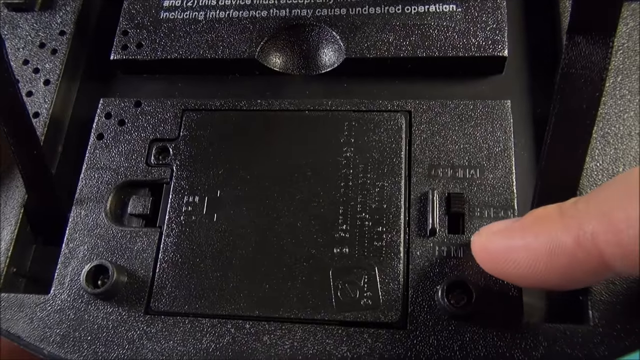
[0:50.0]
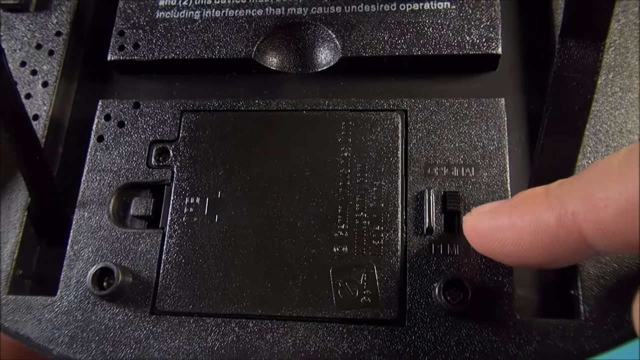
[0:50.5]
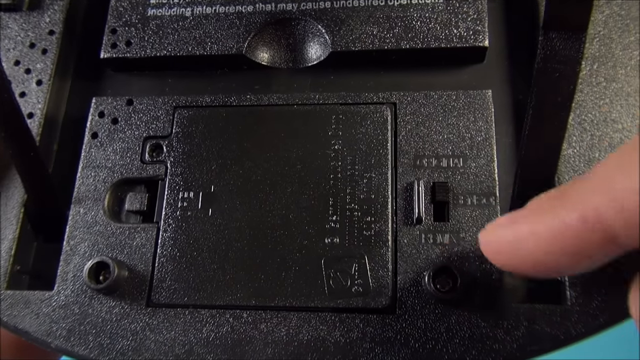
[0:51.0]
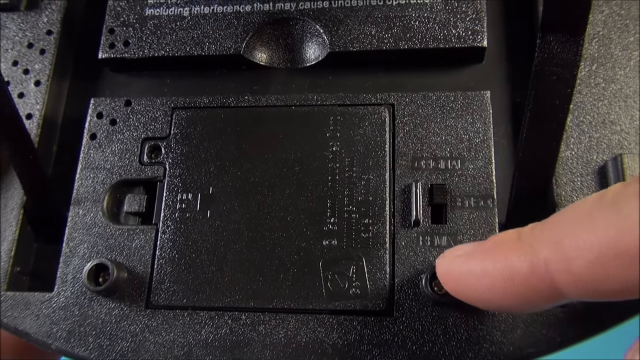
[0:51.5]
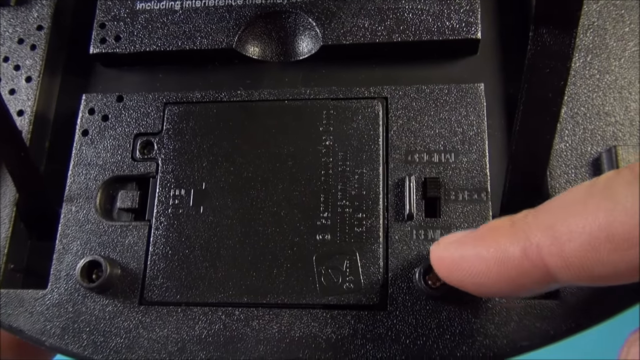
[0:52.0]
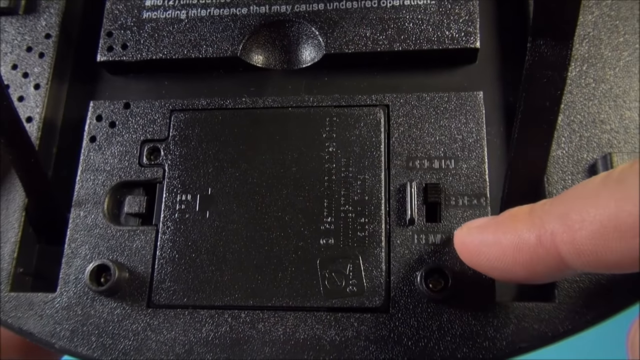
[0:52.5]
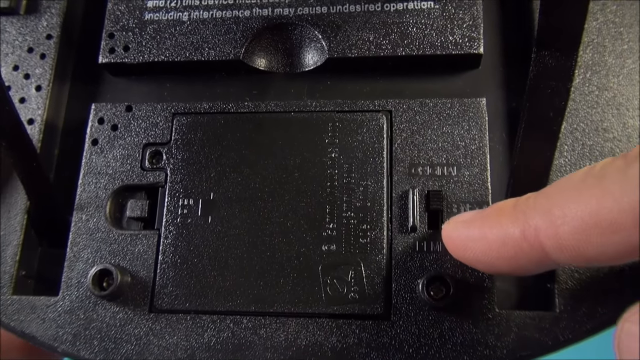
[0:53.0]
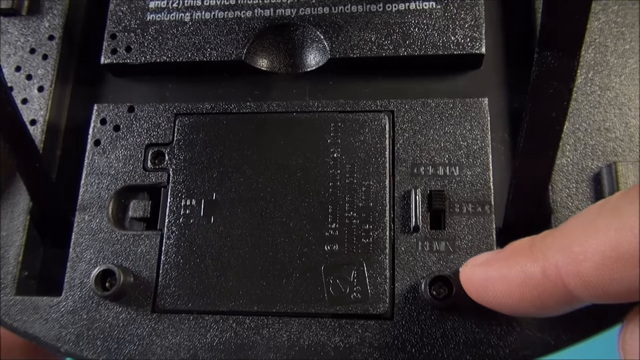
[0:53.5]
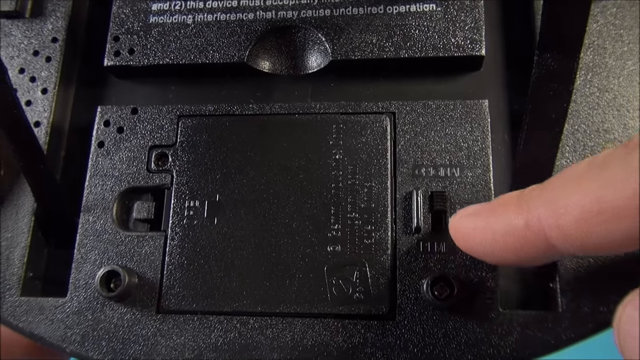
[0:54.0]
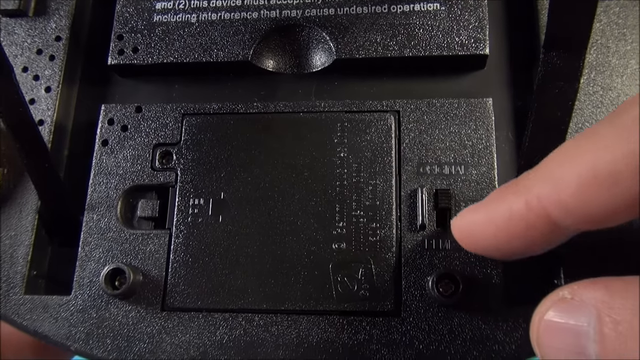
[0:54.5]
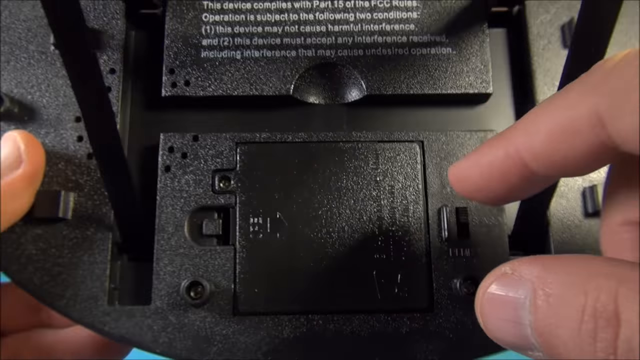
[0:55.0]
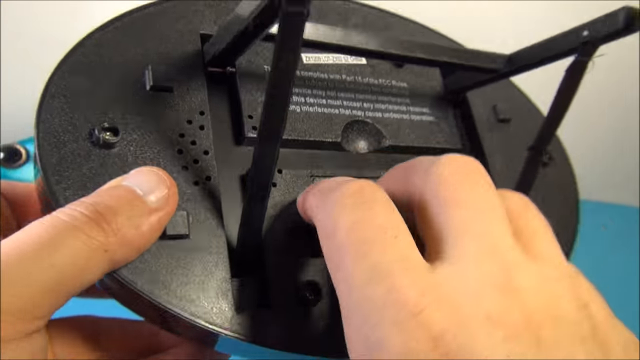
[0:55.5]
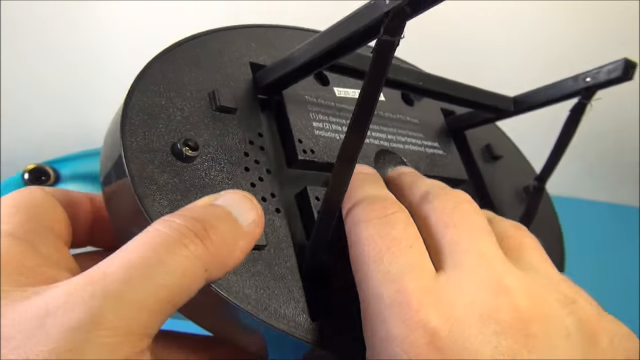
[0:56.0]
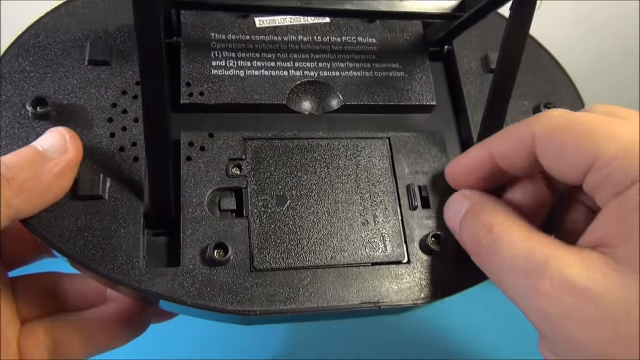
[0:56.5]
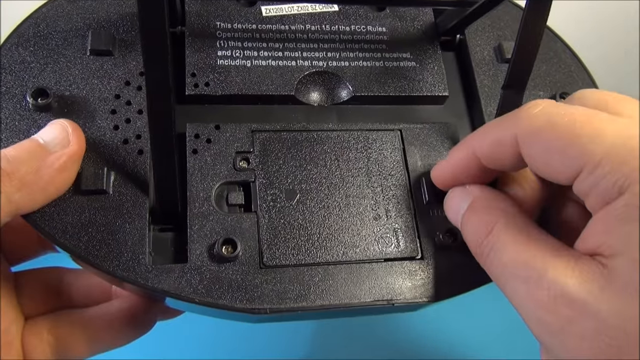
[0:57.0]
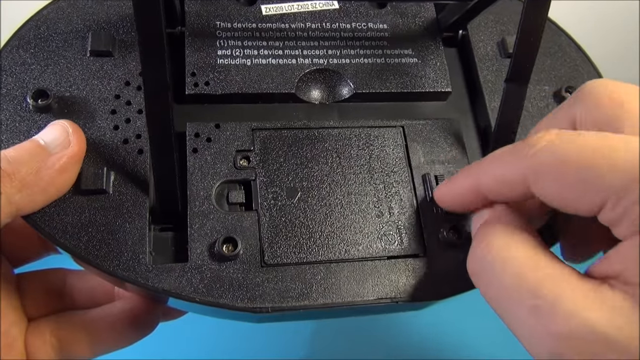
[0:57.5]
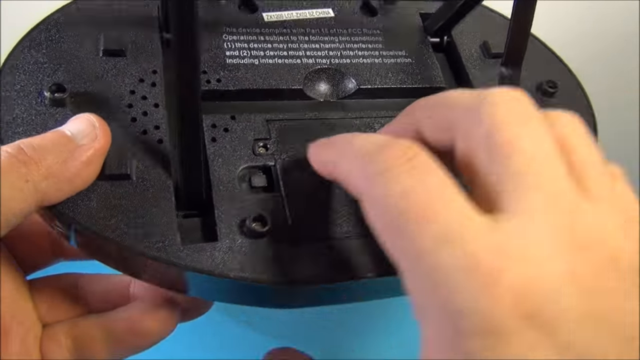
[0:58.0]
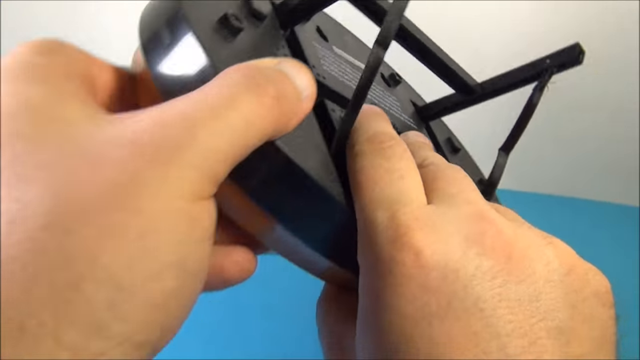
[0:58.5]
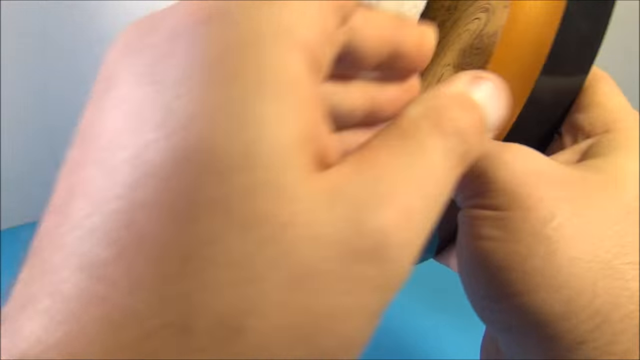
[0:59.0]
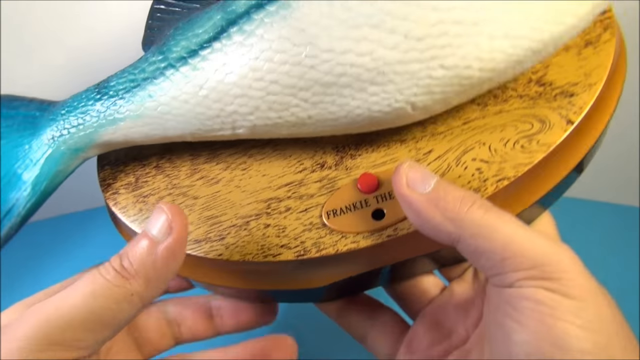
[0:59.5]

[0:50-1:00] A very close-up shot shows the person pointing to the on-off switch on the back and touching the button to play a little. The fish and mounting plate are then turned back over so the fish is clearly visible. The fish is teal blue, with a tail of a darker teal. The belly and the underside up to the head are white, perhaps shaded to a light gray toward the tail but very white toward the head. The fins on top are a very dark teal, and the fin on the side is a much lighter teal. Seven widely spaced vertical lines in a very dark teal run from just above the side fin up to the top. The top half of the fish is shaded from almost a greenish blue toward the head to a deeper teal toward the tail. One eye is visible: very large, light brown, with a very large black pupil.